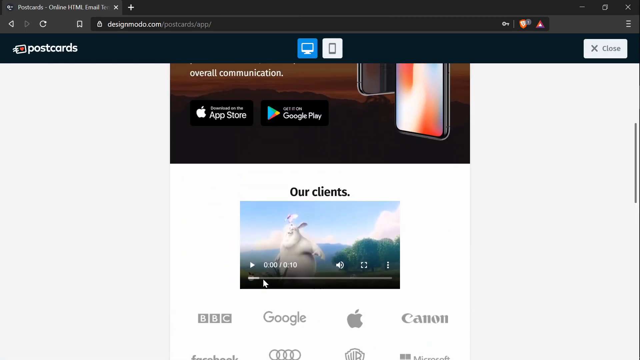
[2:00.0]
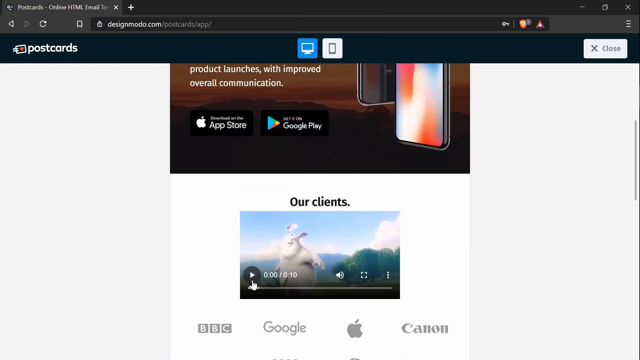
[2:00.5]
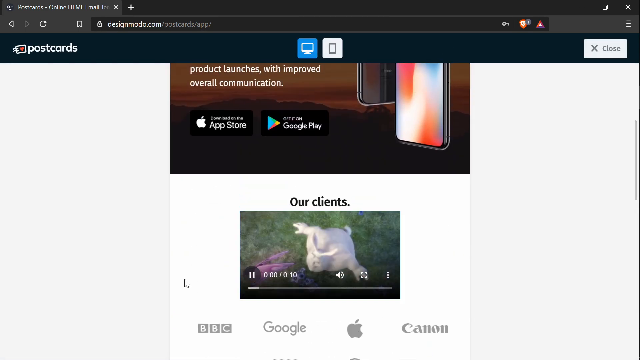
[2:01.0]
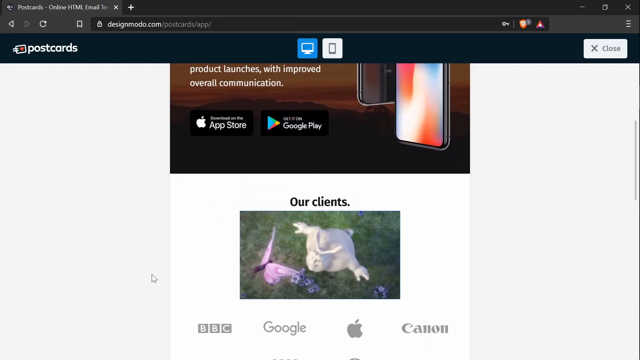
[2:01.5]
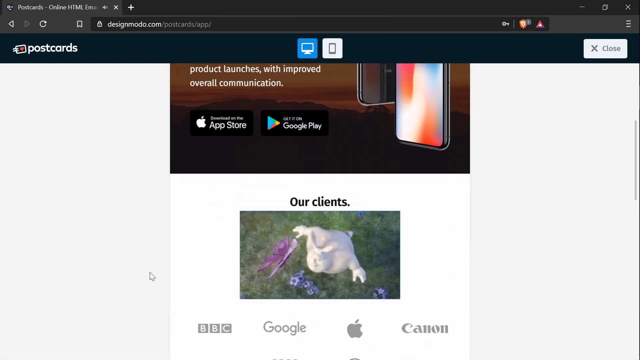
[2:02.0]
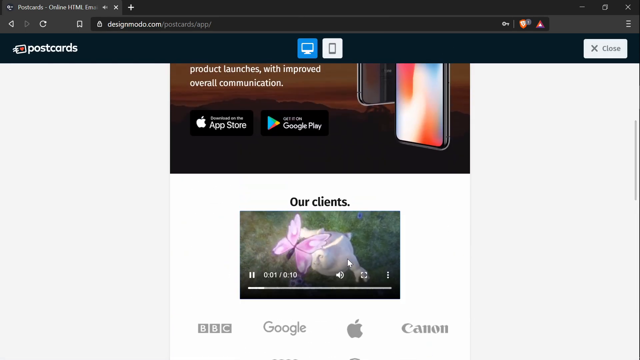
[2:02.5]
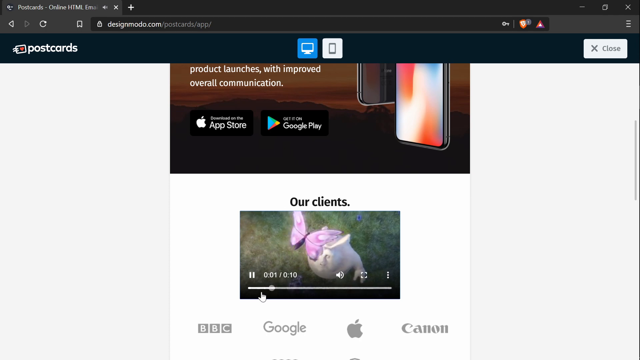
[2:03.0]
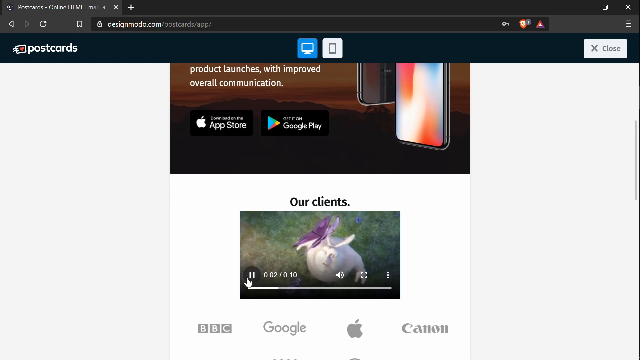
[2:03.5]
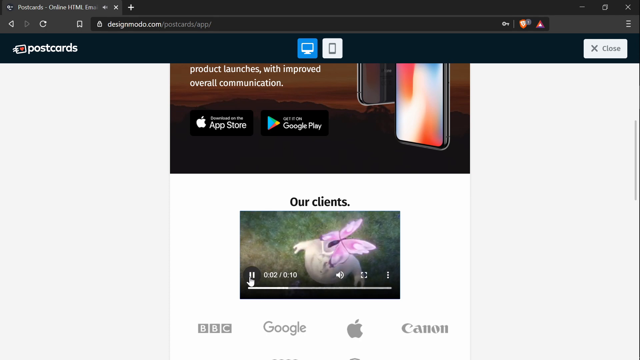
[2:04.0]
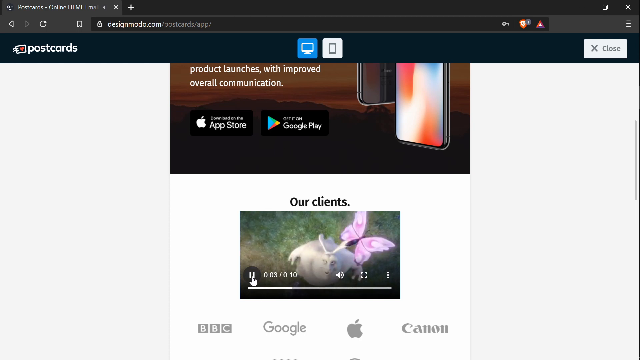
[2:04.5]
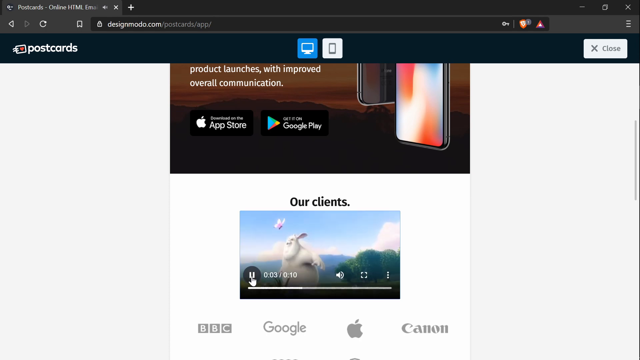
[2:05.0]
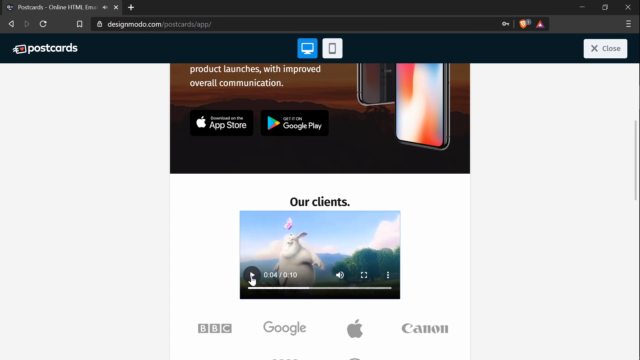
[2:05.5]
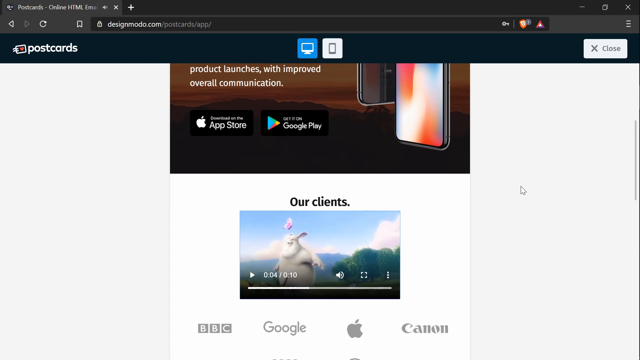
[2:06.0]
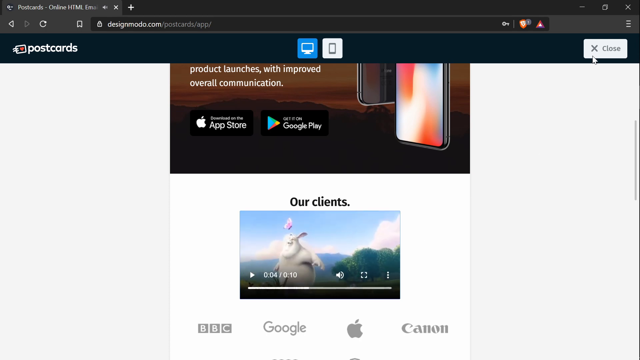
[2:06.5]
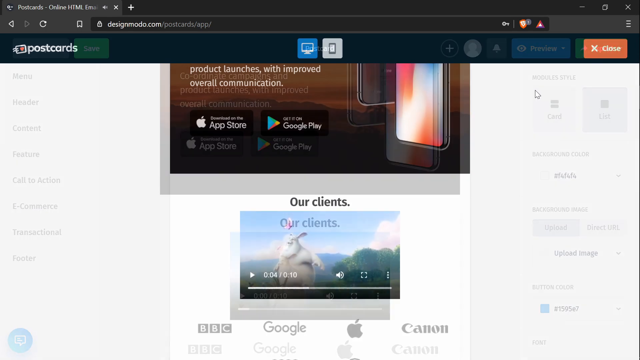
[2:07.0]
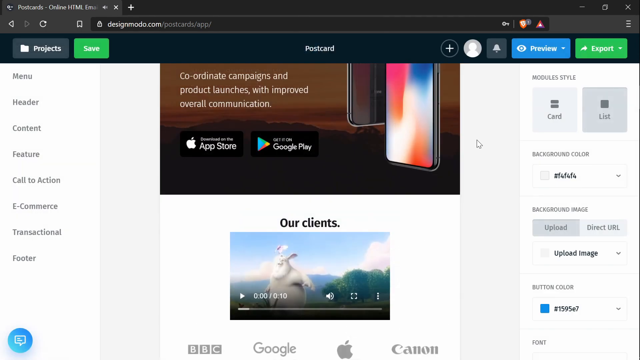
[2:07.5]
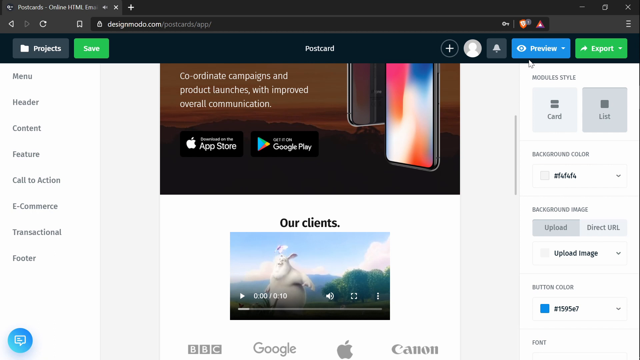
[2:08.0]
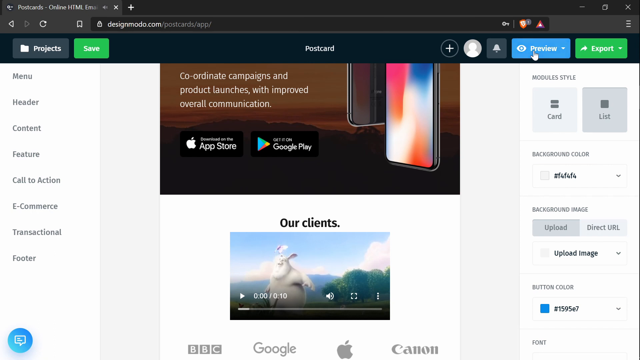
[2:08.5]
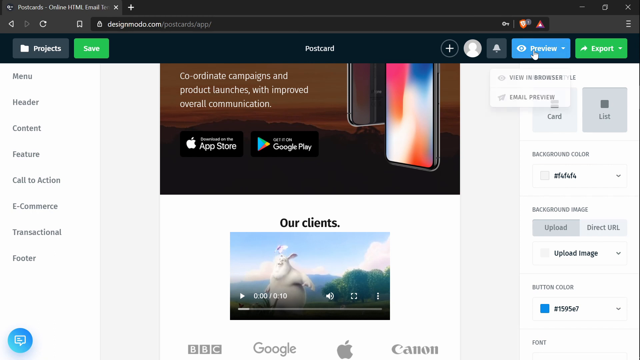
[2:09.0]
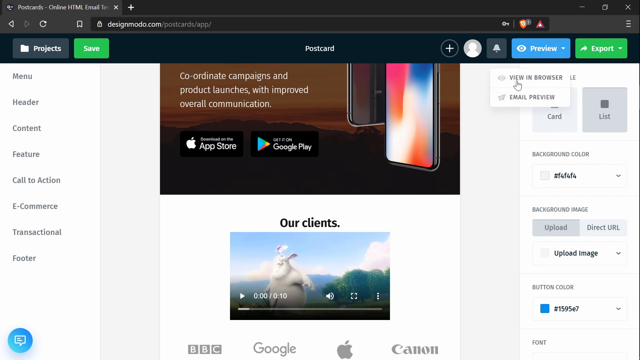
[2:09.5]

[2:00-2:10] The video playing under the our clients section shows a large white rabbit with a purple butterfly flying above it. The rabbit does not look like a traditional rabbit; it appears to have been altered in some way by artificial intelligence, as it has a face. It looks up at the butterfly. In the background there are some trees, a blue sky and some mountains, and the large rabbit follows the butterfly. The person then clicks off this, goes back to preview in the top right, and looks at the email preview.